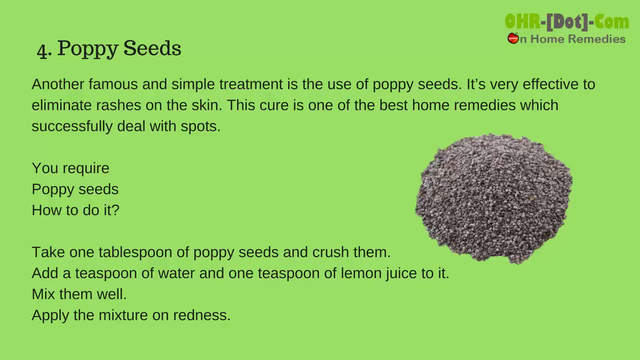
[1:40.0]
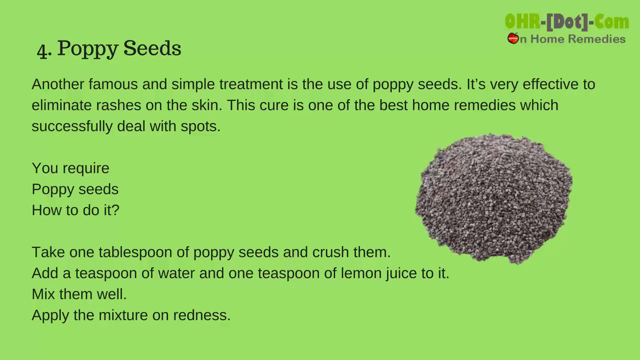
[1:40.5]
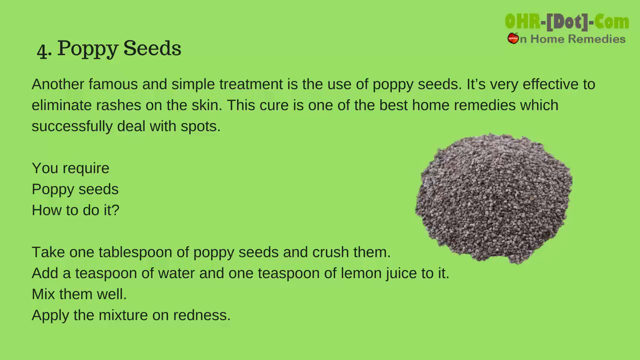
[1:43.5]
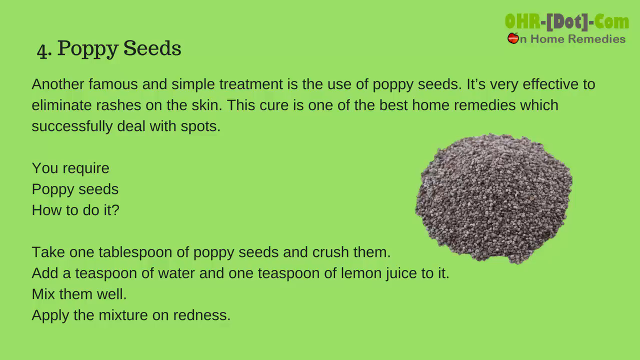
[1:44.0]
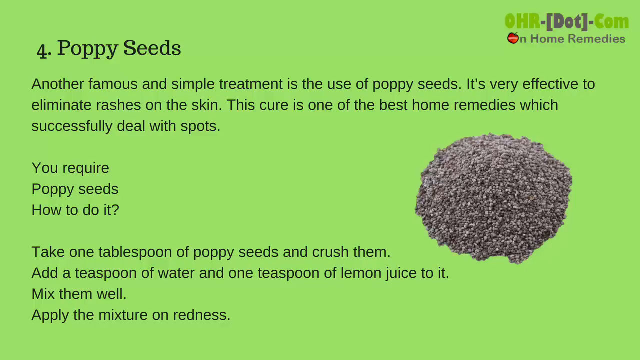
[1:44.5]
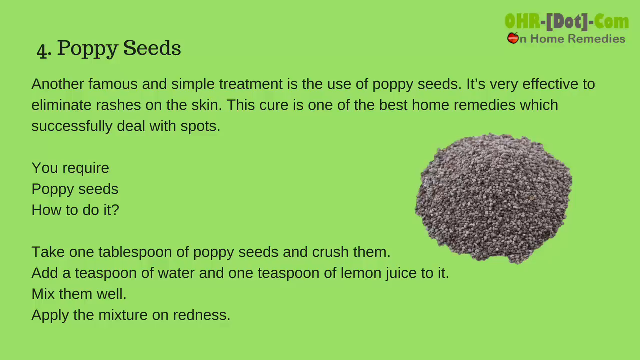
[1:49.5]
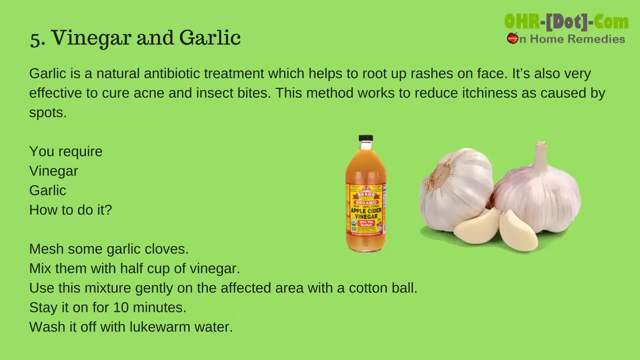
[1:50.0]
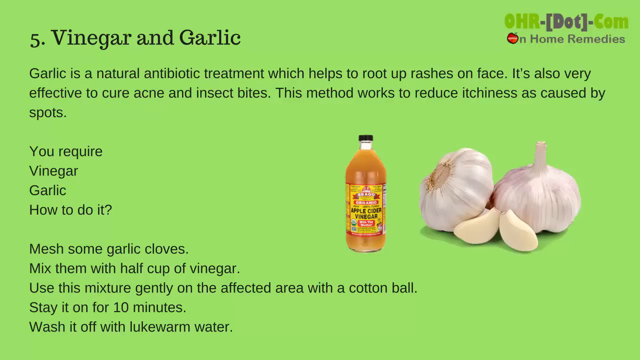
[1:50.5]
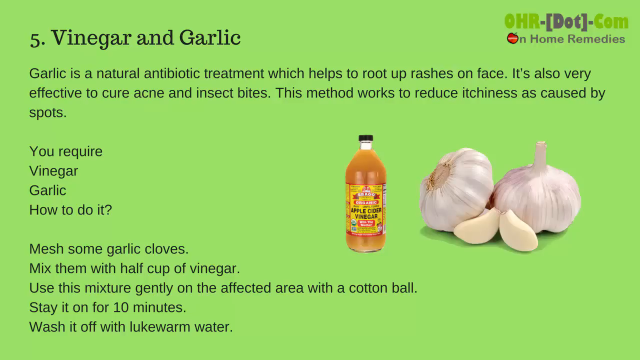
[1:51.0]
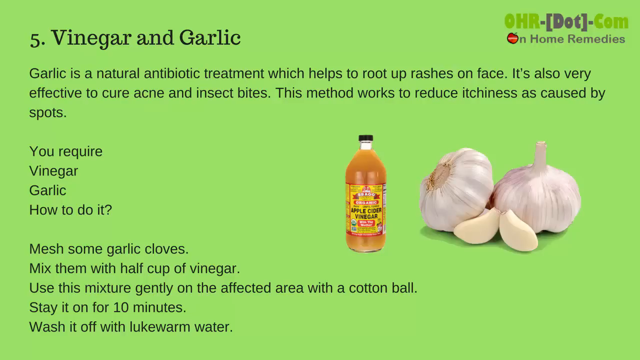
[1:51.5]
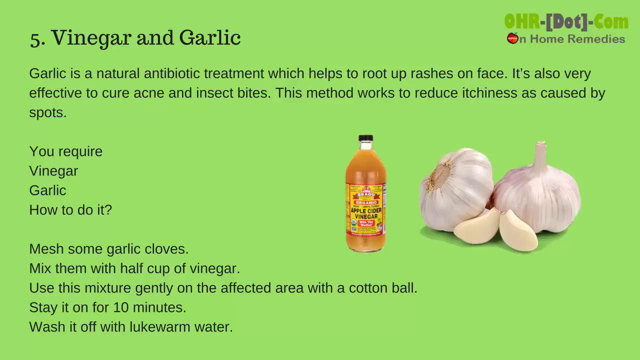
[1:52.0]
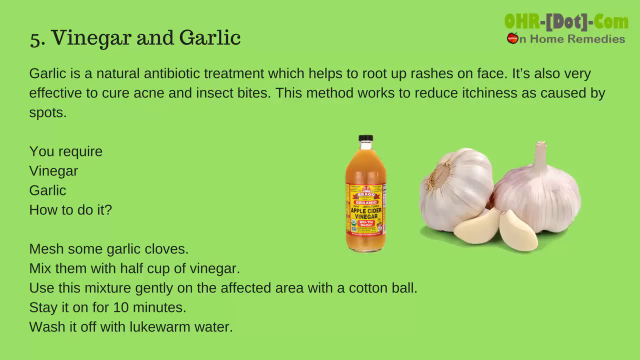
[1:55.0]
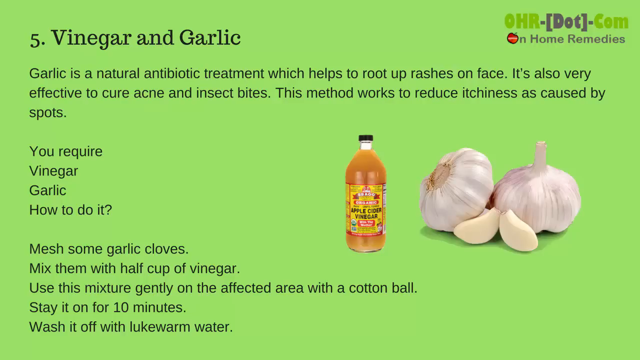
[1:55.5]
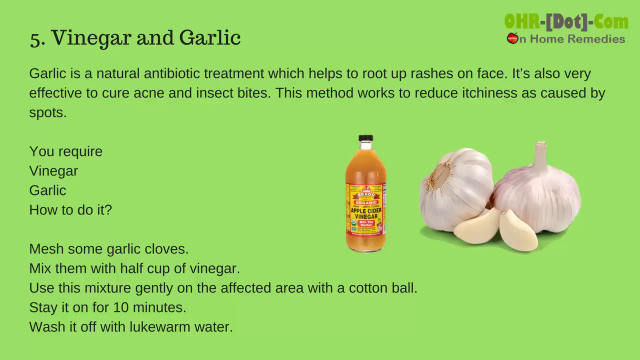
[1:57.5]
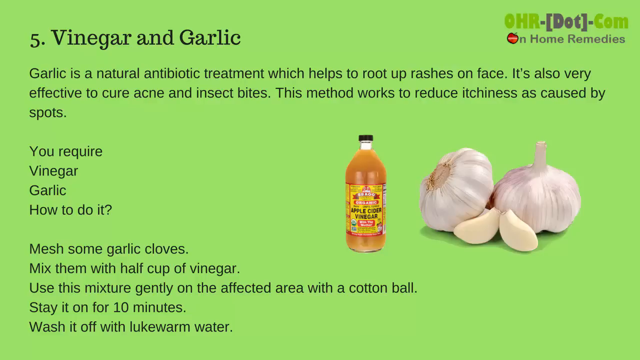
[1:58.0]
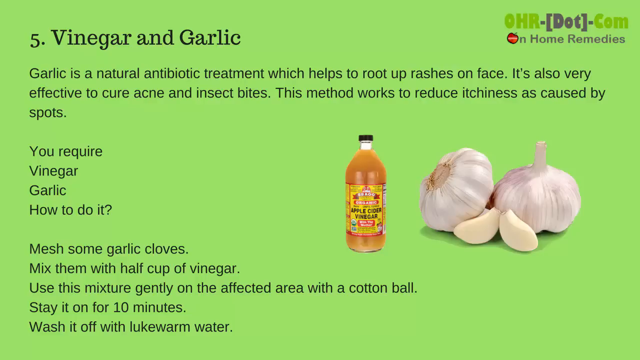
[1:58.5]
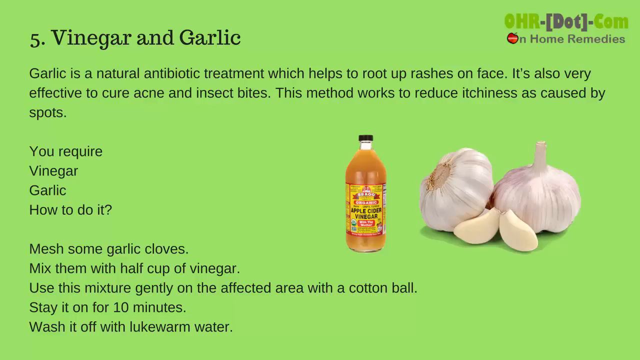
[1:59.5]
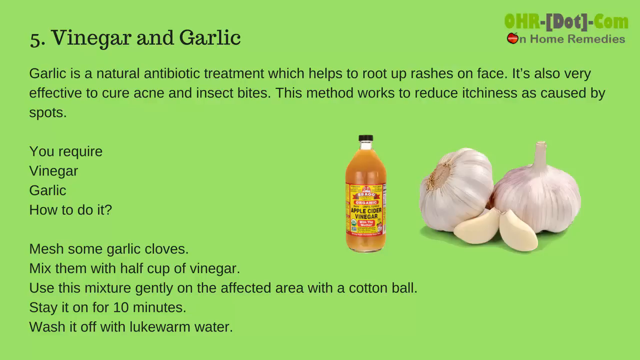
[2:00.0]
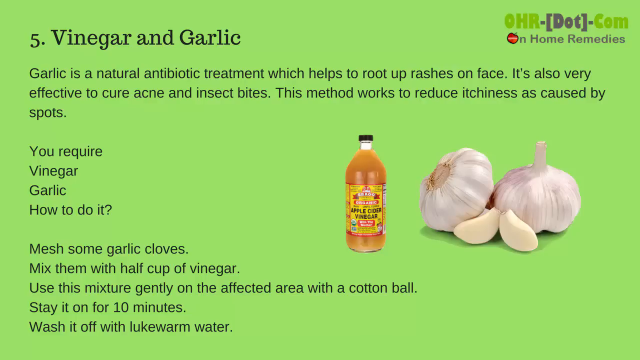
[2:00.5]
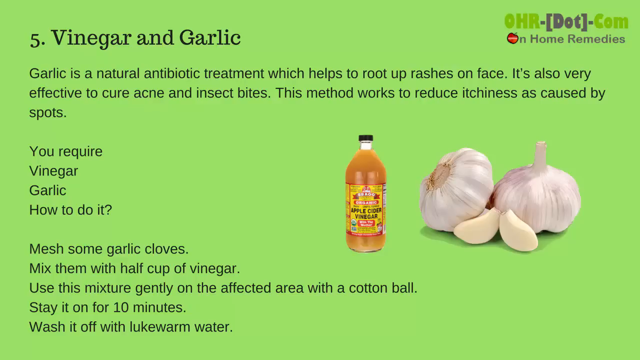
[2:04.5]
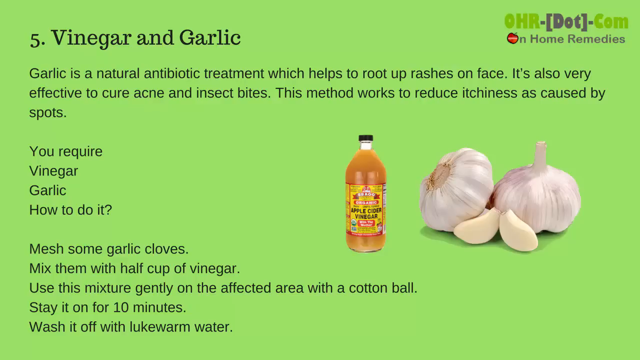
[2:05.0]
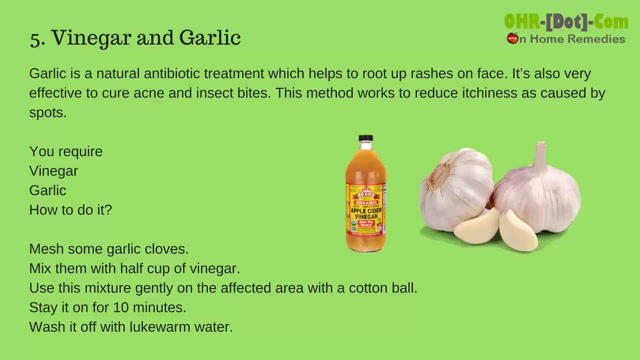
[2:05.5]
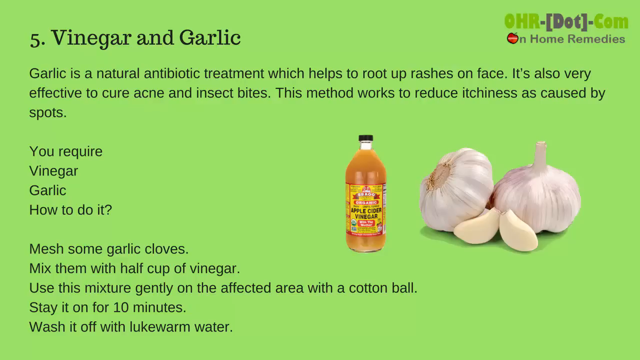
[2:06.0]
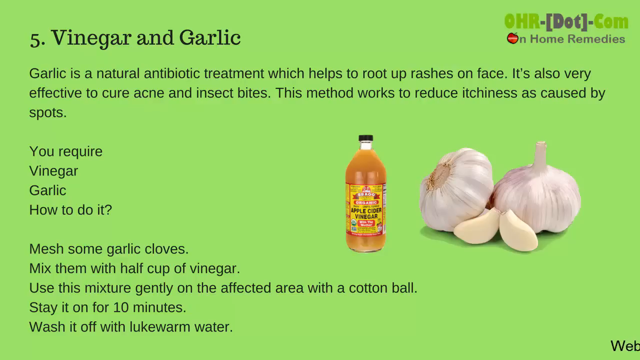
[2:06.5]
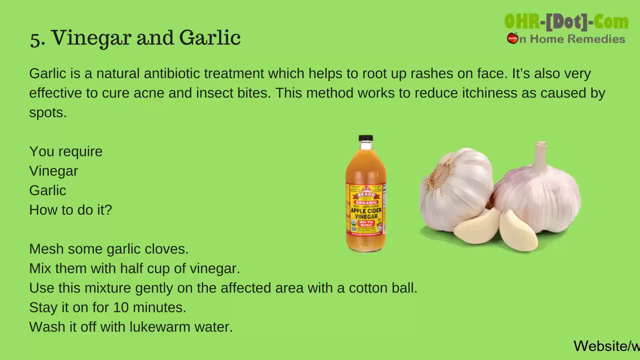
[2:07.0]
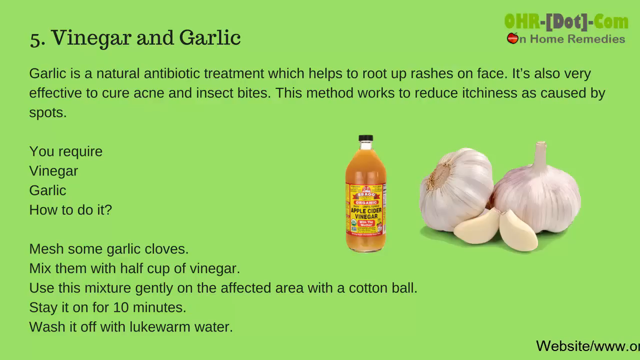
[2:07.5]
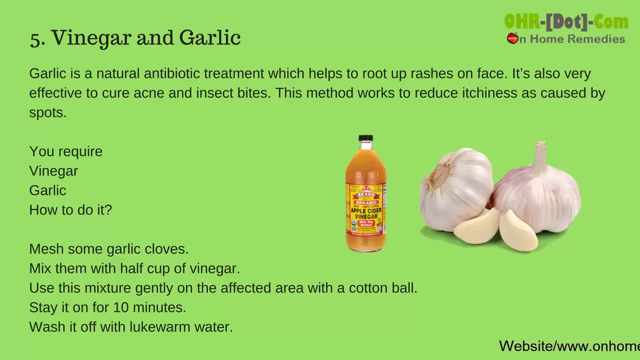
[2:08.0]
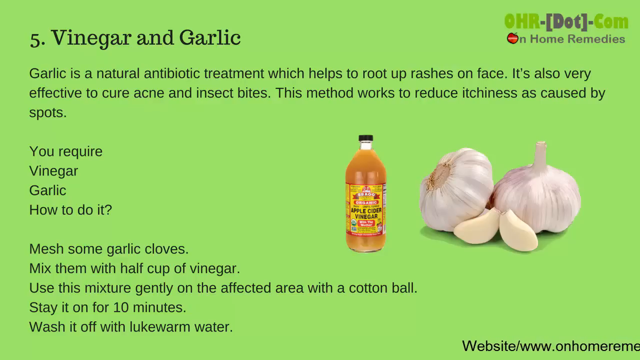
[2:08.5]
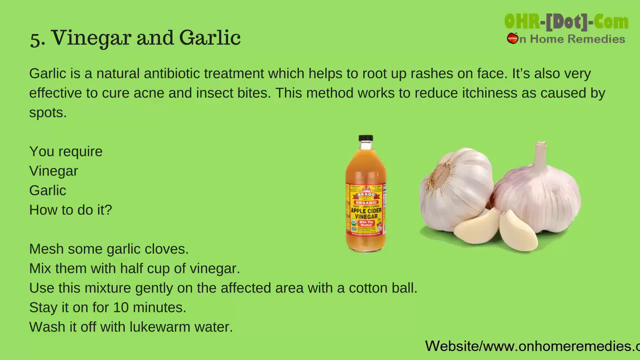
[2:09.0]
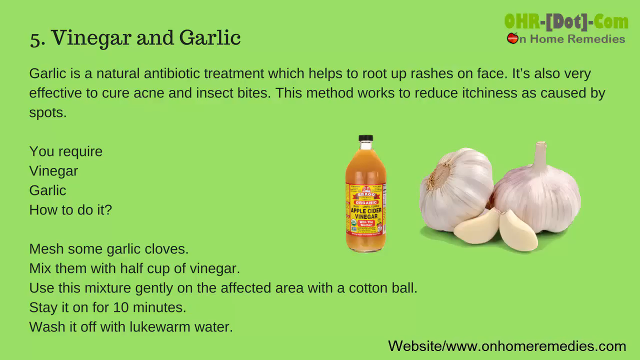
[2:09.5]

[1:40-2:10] The next home remedy is vinegar and garlic, powered by HRN.com in home remedies. The text says it helps root up rashes on the face, is effective against insect bites, is a safe treatment, and works to reduce itches and aches caused by spots. It lists vinegar and garlic as required and explains how to do it: mix some garlic cloves with half a cup of vinegar and apply the mixture gently to the affected area with a cotton ball. Garlic and a bottle of vinegar are shown.